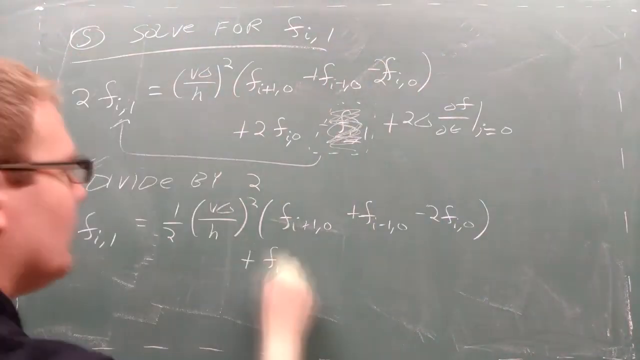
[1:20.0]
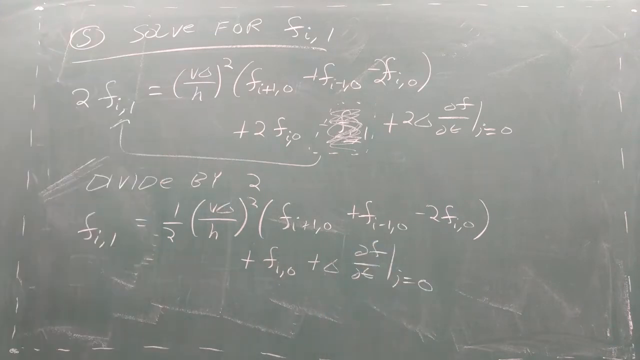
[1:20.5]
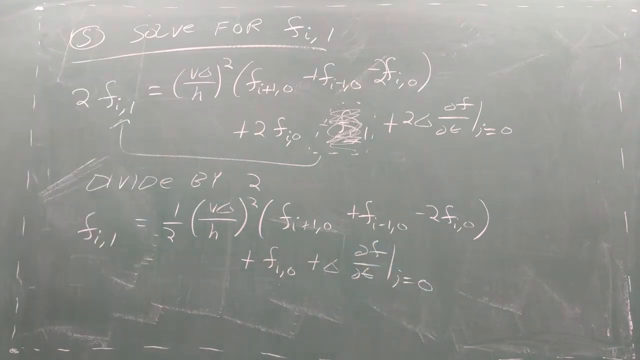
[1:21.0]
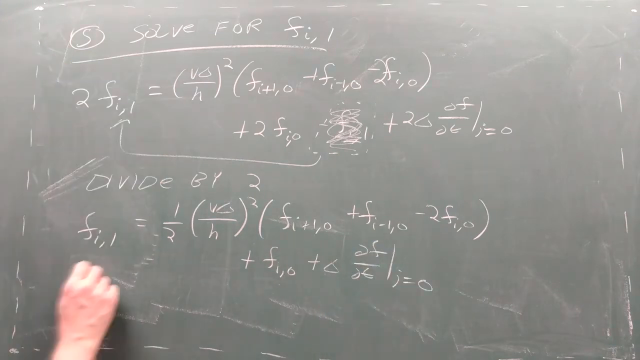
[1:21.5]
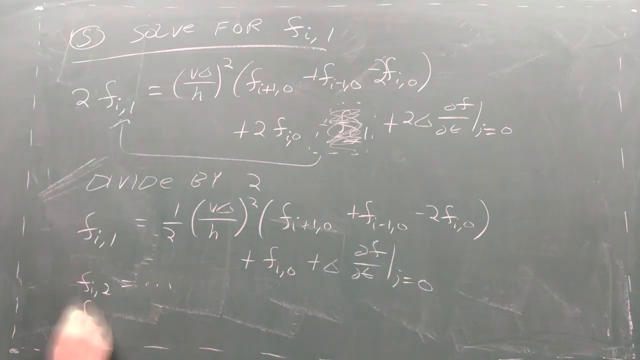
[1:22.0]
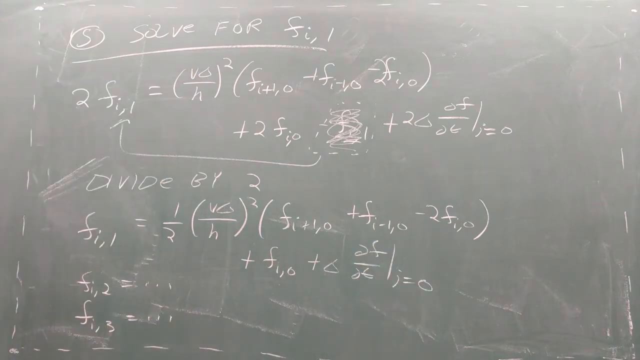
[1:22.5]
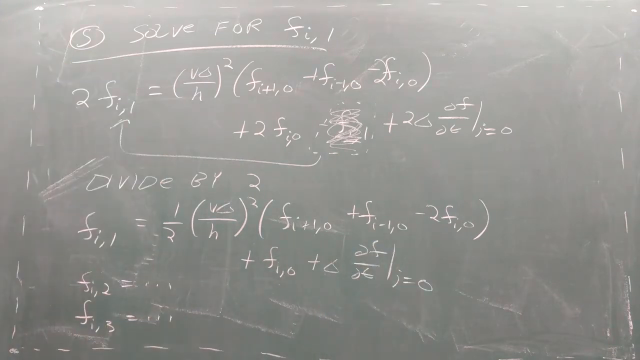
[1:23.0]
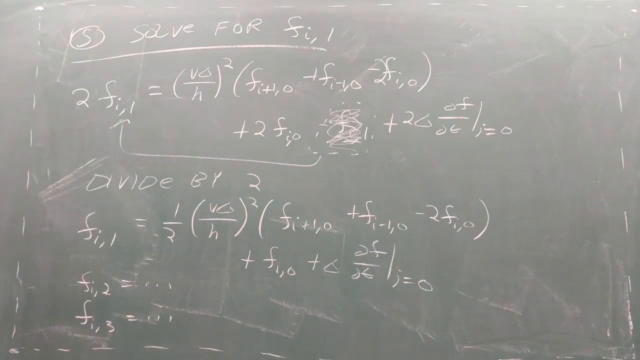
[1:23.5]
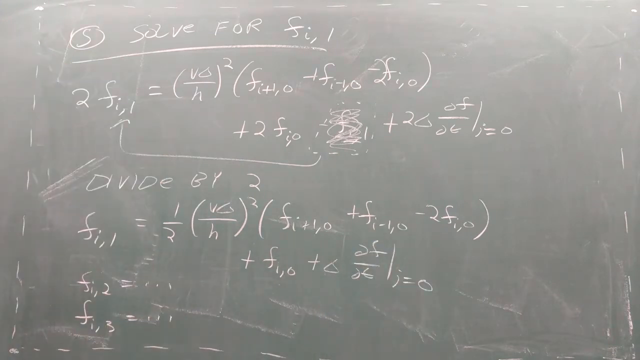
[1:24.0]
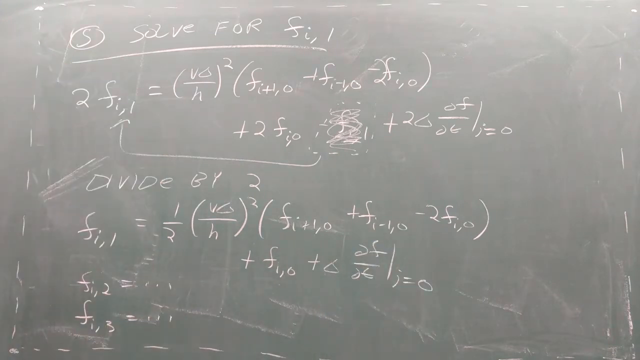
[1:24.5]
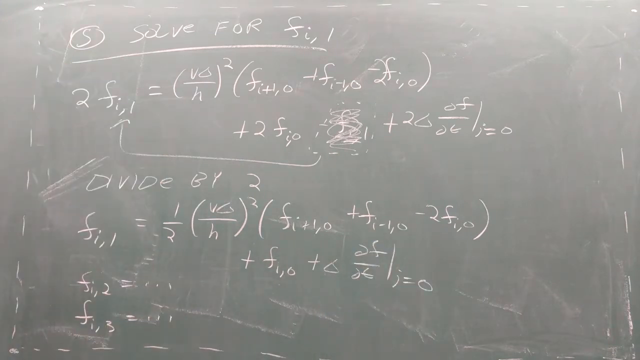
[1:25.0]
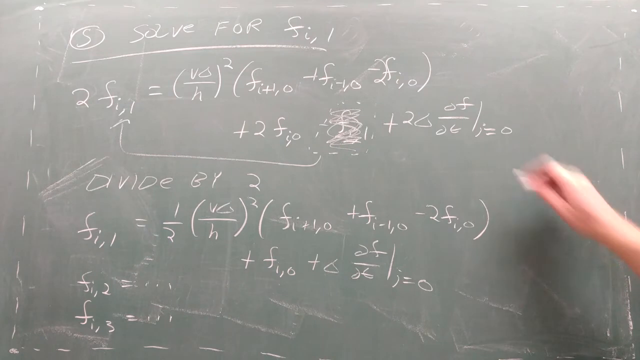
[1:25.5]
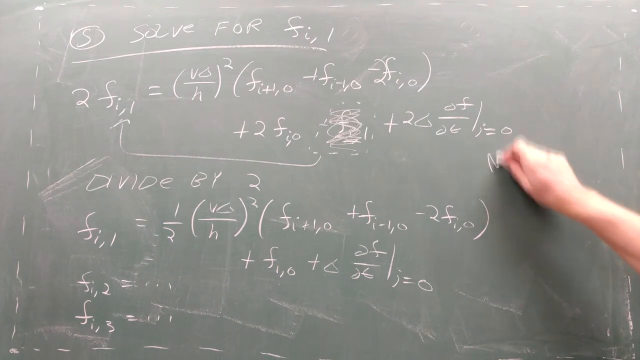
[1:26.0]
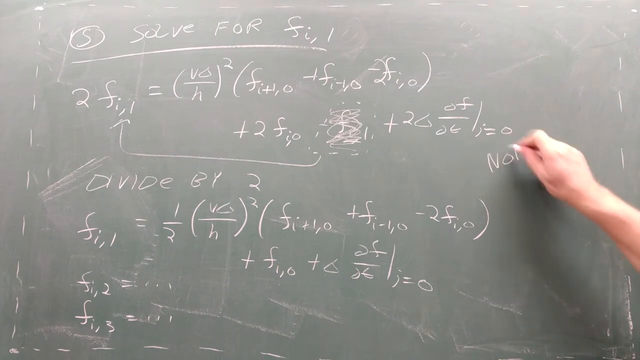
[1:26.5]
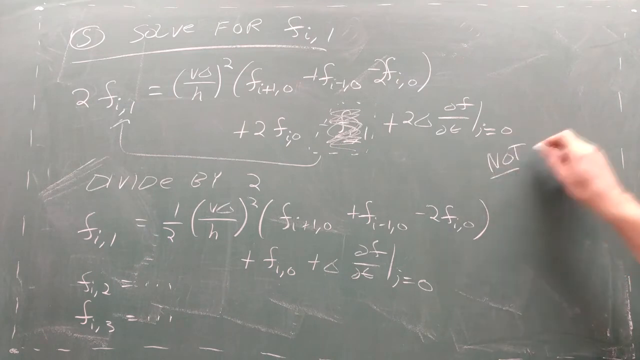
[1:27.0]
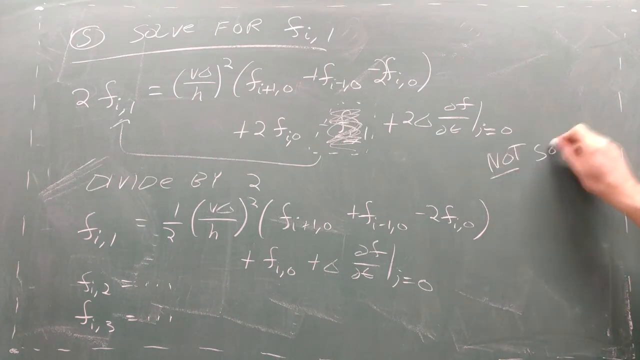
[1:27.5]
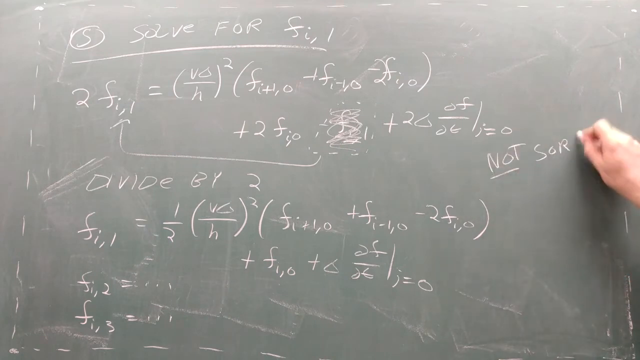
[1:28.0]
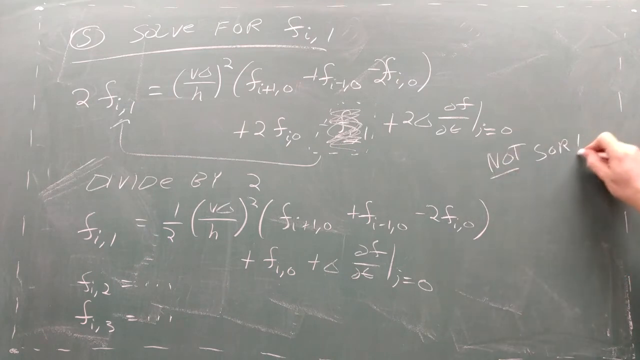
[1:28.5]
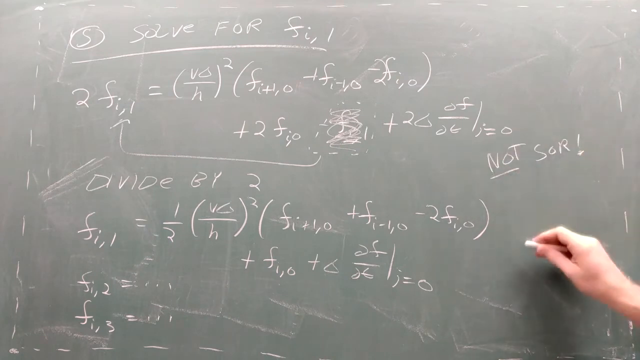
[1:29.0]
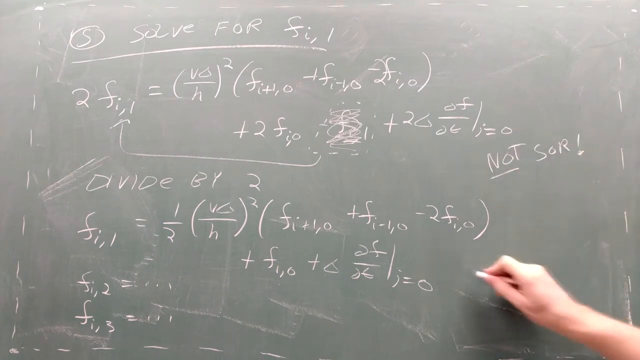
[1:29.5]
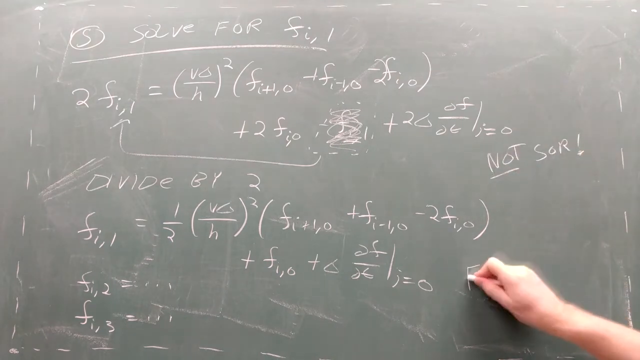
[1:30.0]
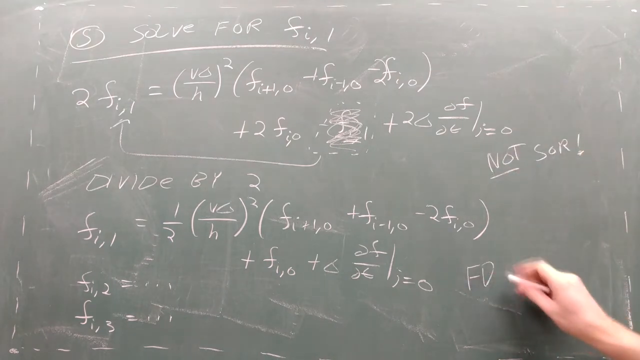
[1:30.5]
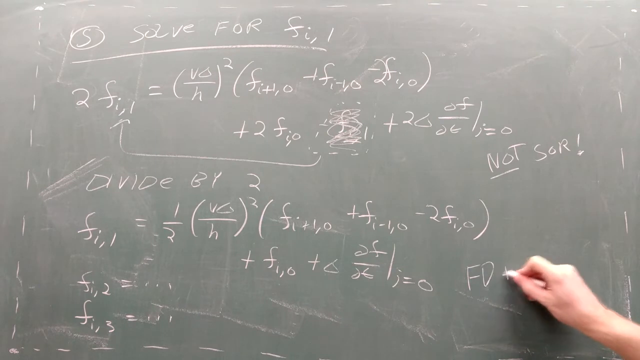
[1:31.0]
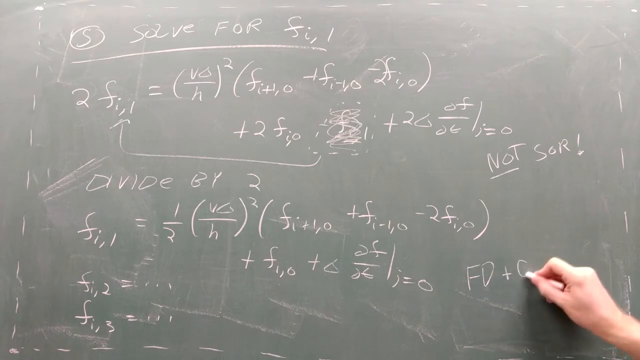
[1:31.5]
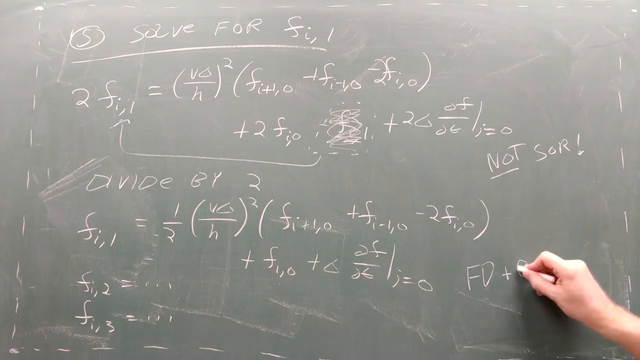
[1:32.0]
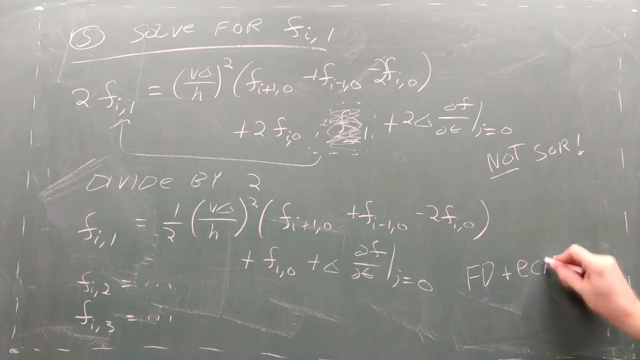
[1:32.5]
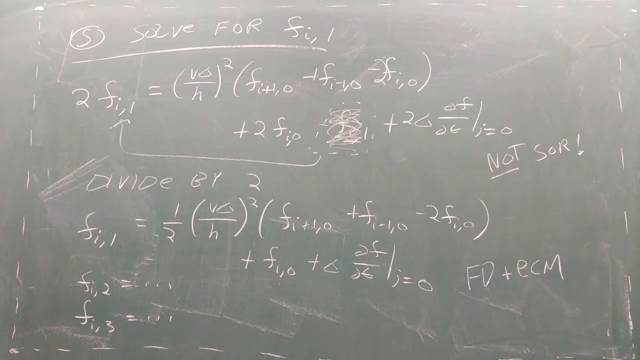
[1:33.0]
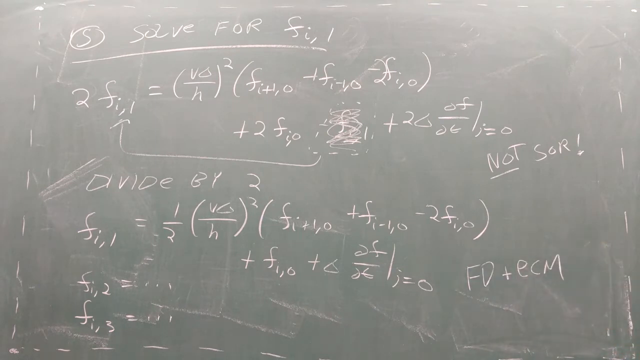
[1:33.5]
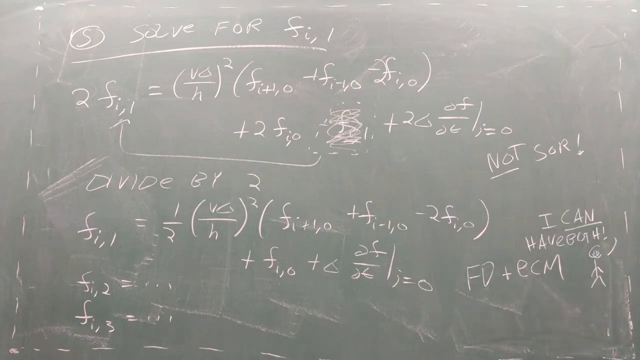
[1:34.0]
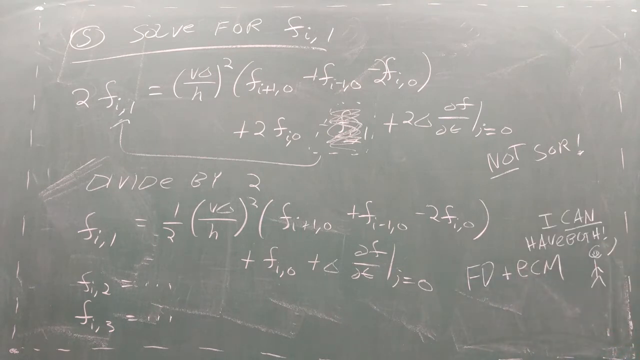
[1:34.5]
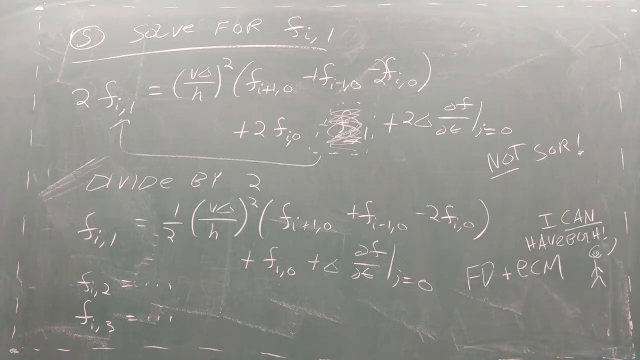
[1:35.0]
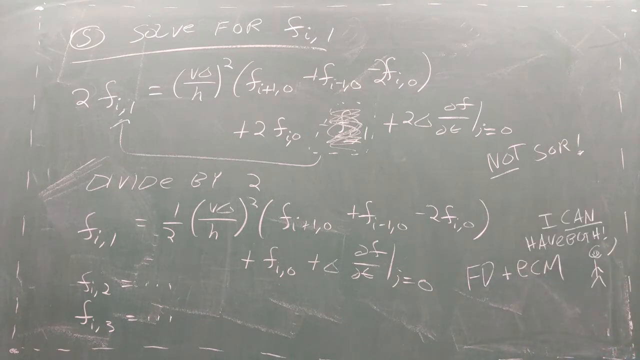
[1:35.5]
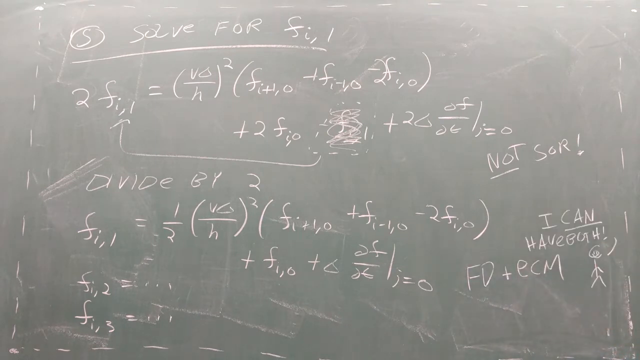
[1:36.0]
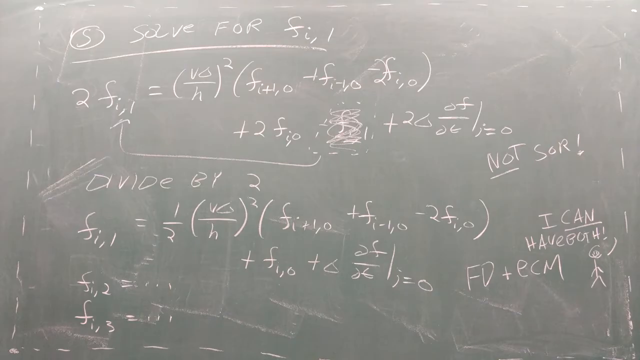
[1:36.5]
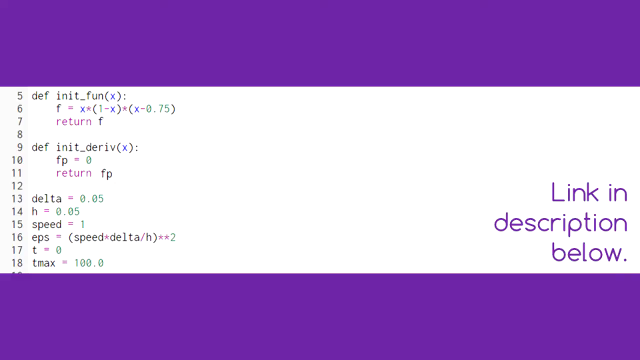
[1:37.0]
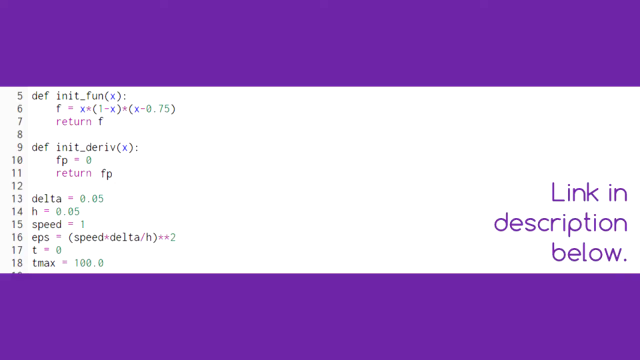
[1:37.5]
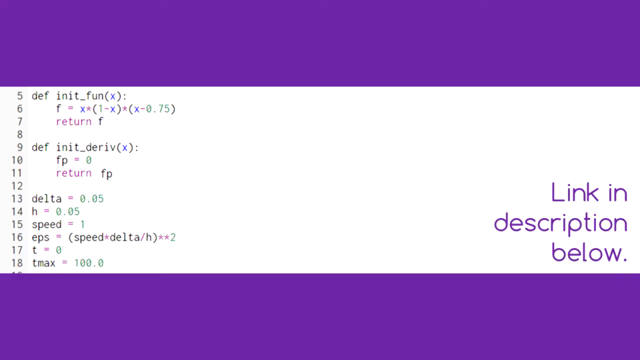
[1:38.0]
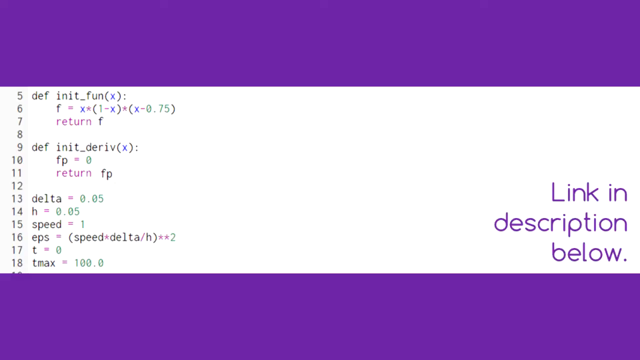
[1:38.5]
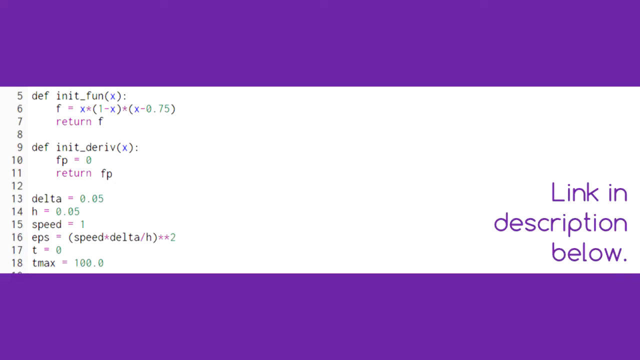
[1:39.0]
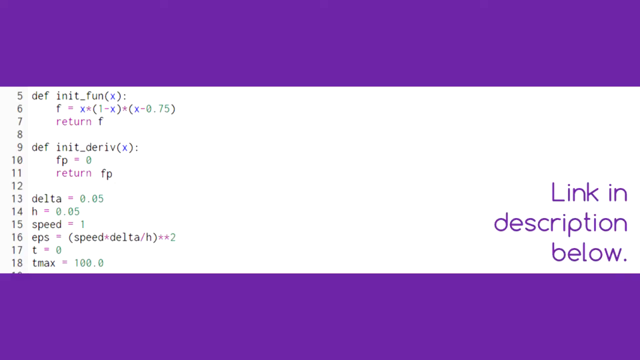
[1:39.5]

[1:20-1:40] He is still solving for F1, writing out different steps and equations from step one through step five, and circles key points as he writes them down.